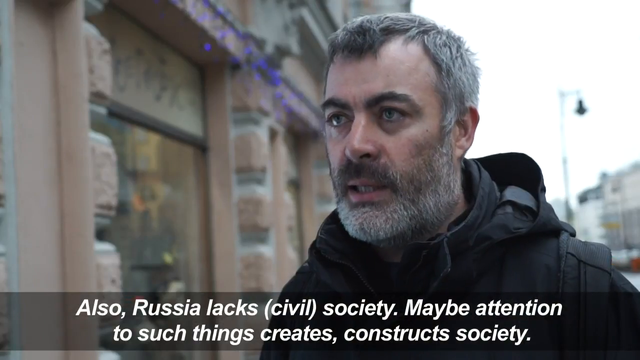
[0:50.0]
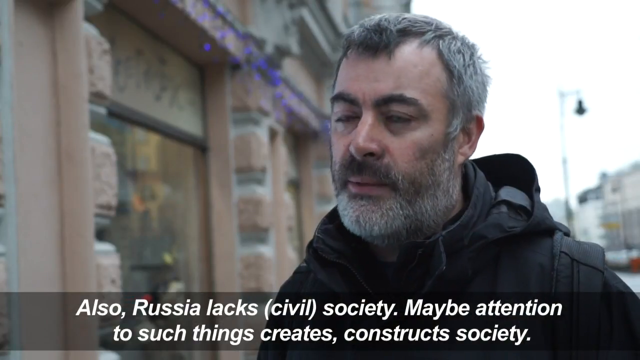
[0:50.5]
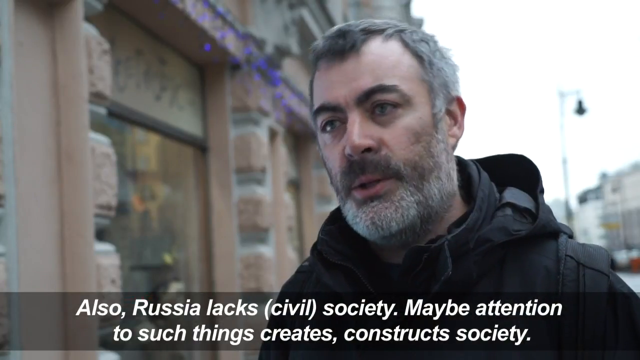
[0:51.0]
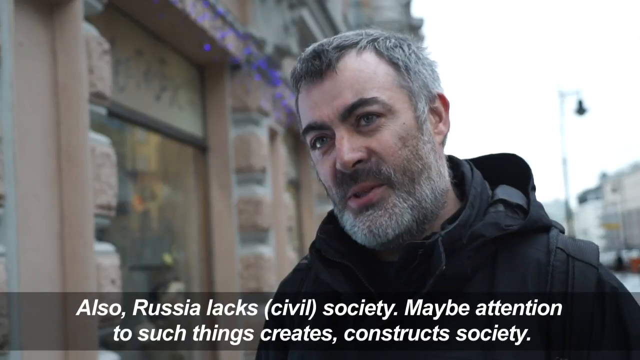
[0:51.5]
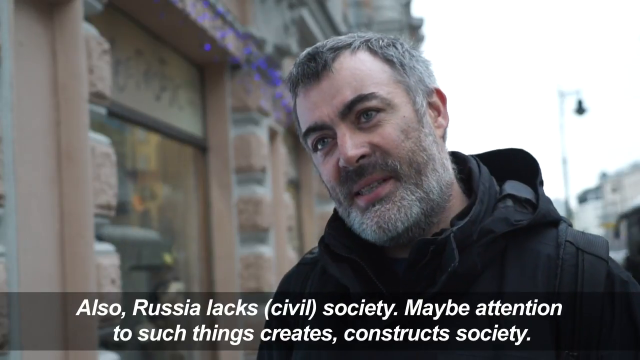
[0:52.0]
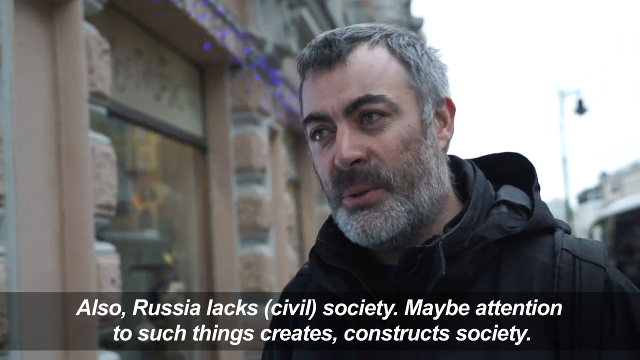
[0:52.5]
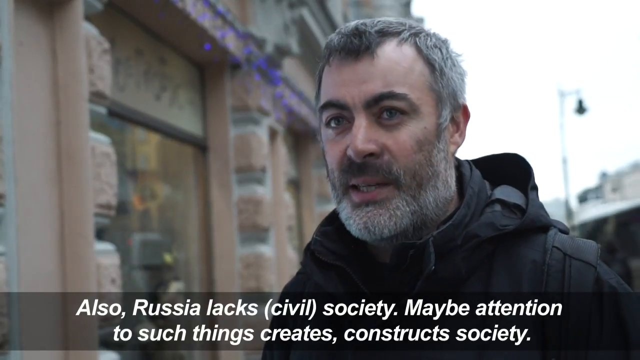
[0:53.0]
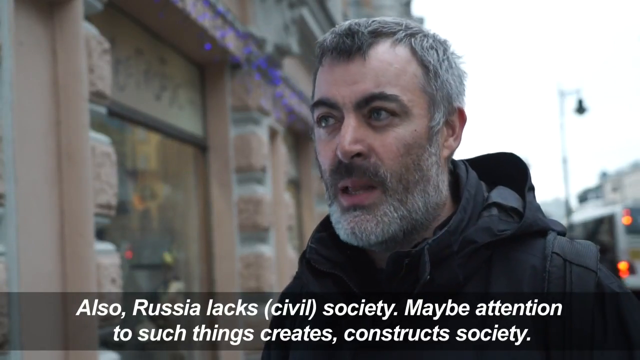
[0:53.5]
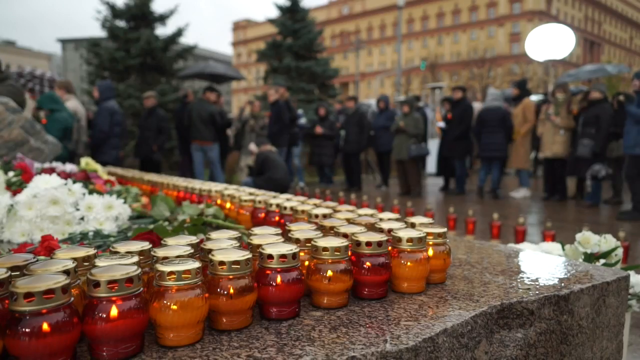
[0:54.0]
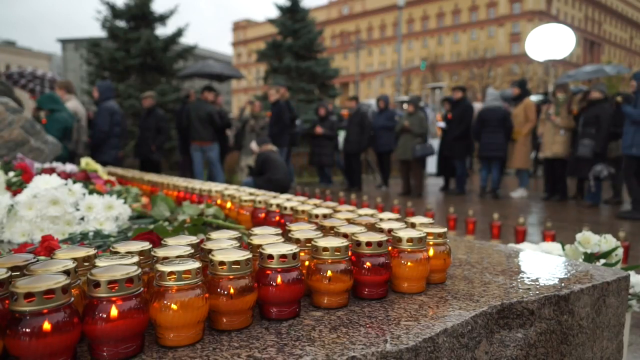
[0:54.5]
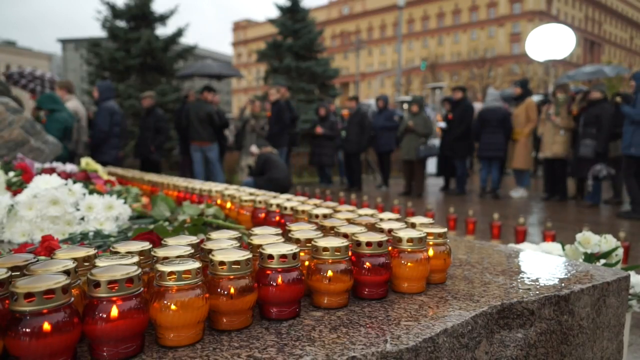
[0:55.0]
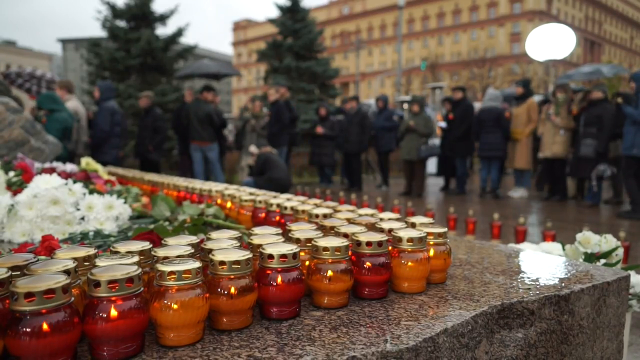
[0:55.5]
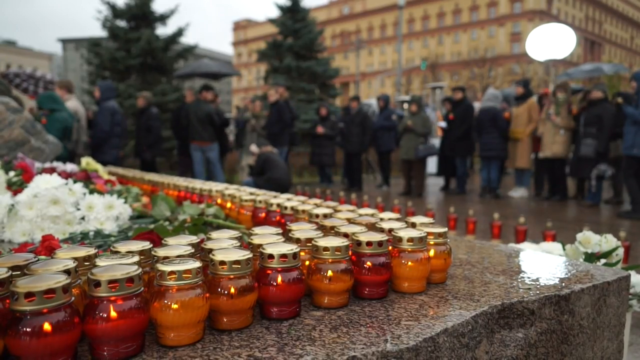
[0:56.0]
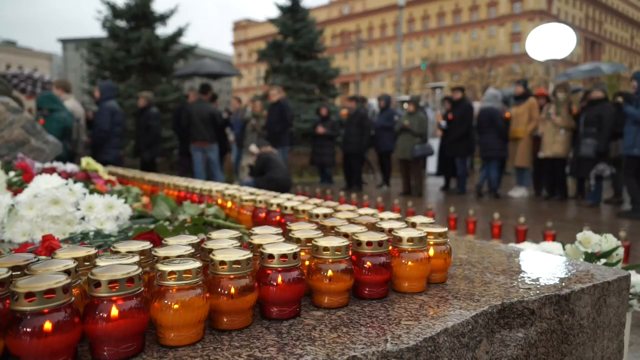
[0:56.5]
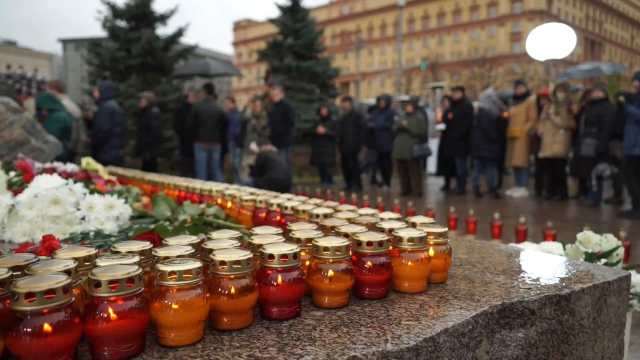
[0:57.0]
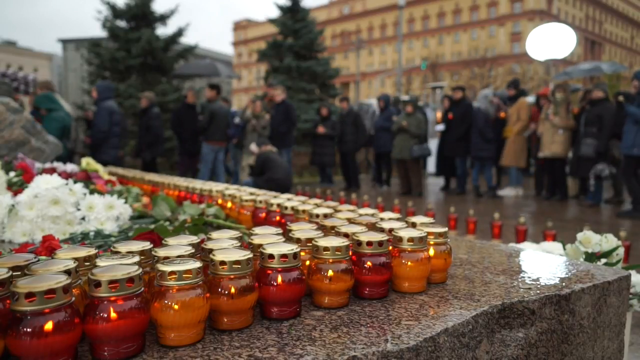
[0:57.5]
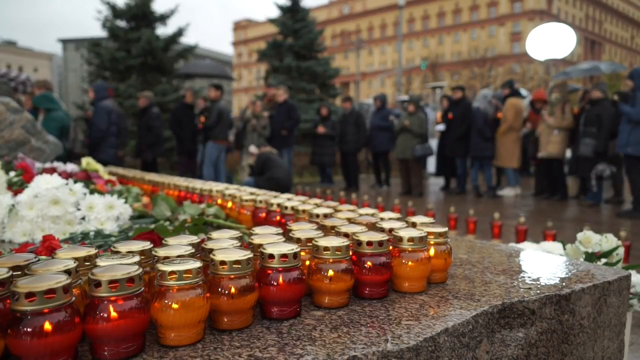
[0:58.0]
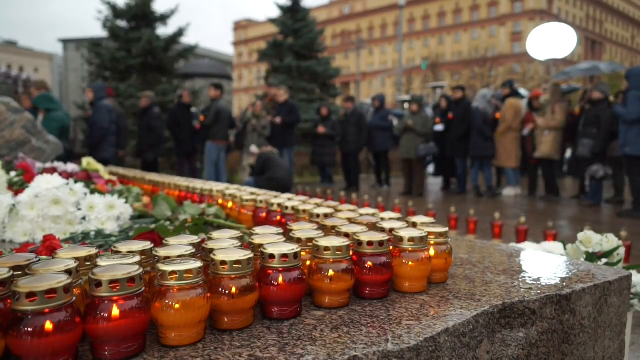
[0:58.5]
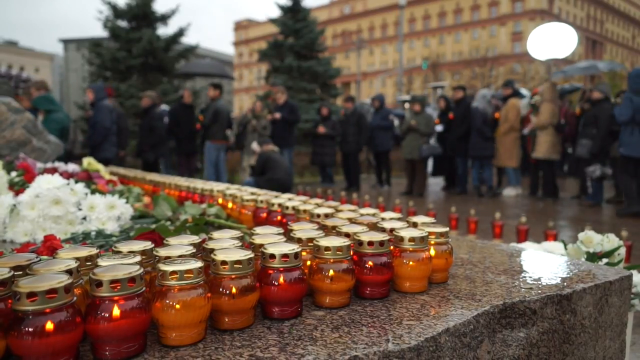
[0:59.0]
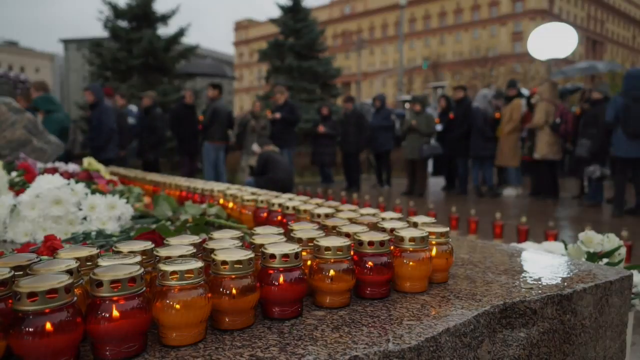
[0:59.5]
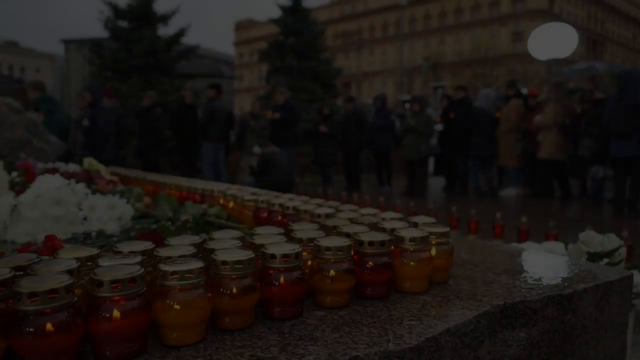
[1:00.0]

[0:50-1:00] The man with the graying beard talks to the camera with a critical look on his face, and the text reads "also Russia lacks civil society maybe attention to such things creates constructs society." The video then cuts back to the memorial, where people stand around; many lit candles are on what looks like an elevated stone structure in the middle of the courtyard, along with flowers.